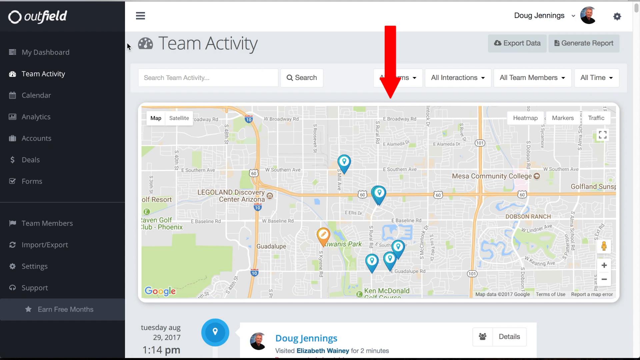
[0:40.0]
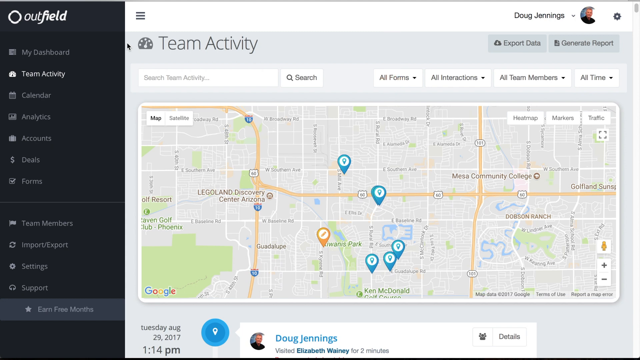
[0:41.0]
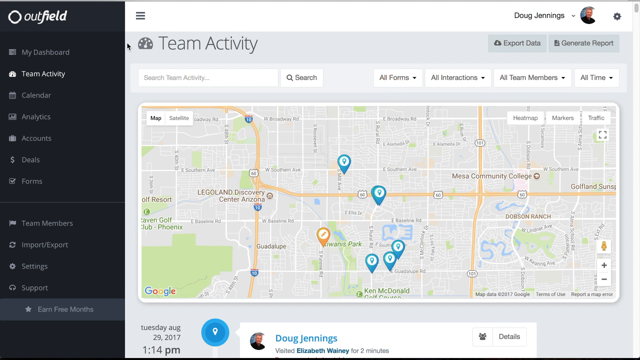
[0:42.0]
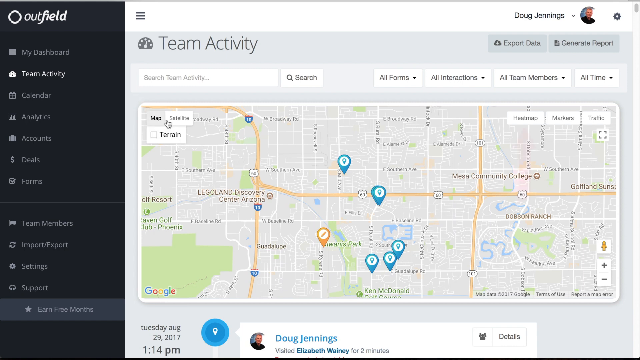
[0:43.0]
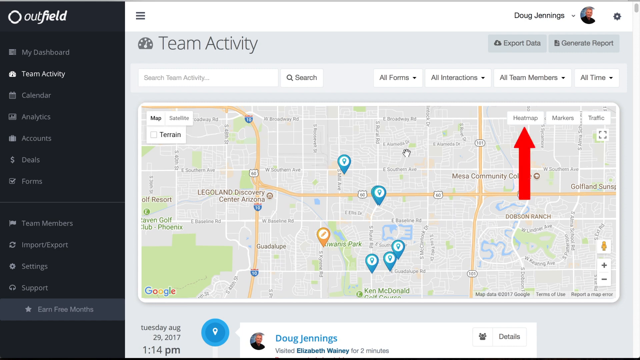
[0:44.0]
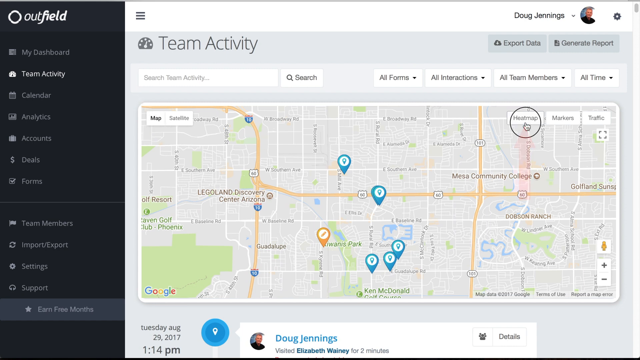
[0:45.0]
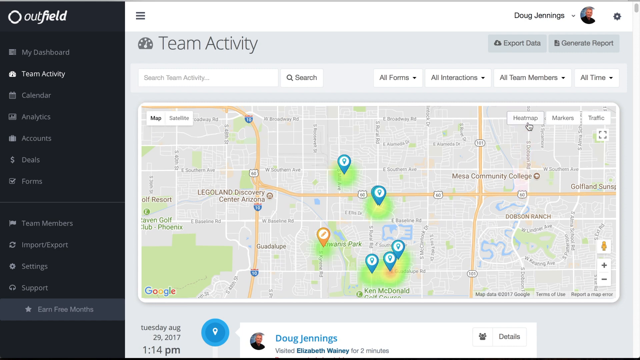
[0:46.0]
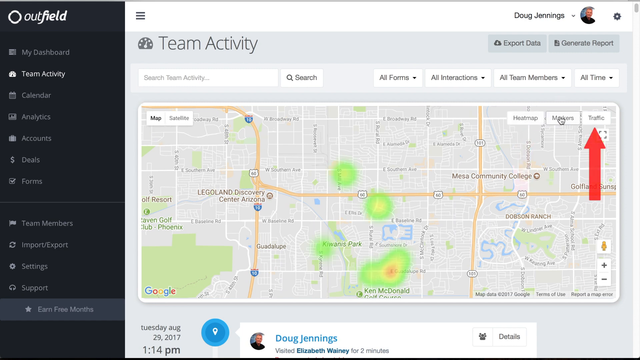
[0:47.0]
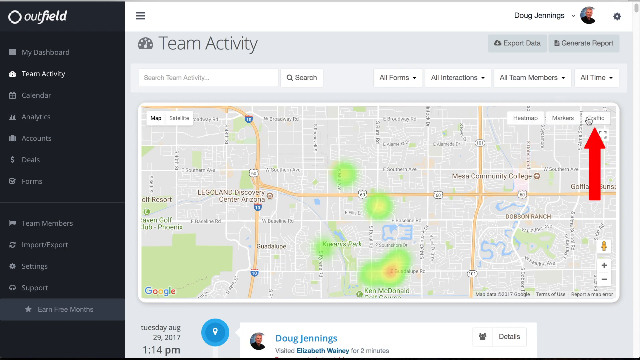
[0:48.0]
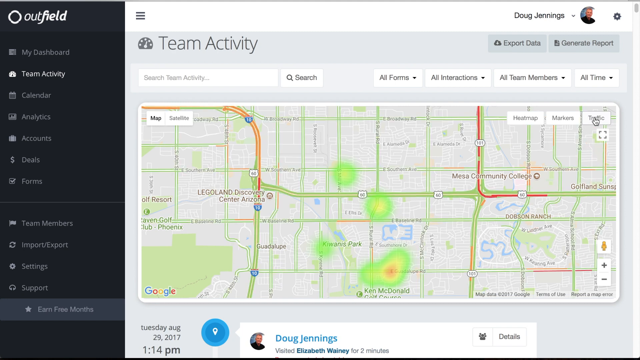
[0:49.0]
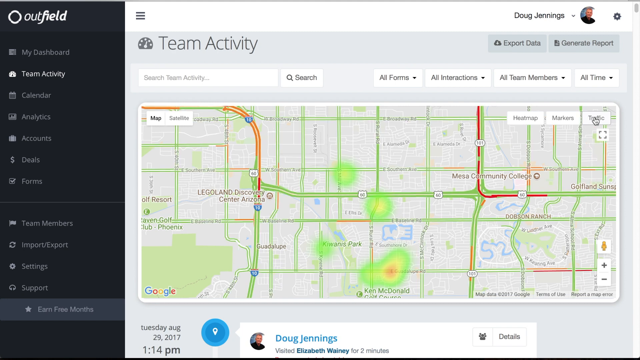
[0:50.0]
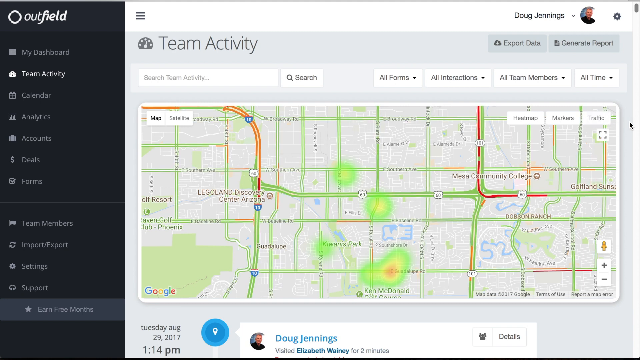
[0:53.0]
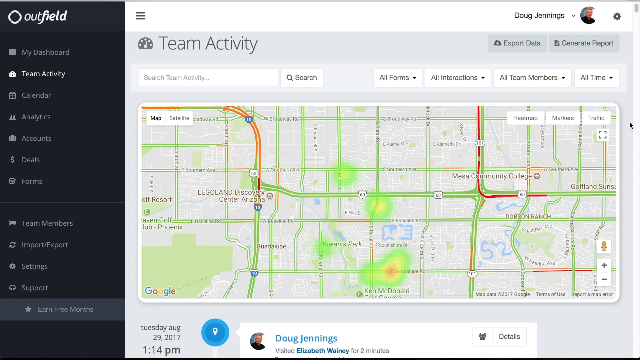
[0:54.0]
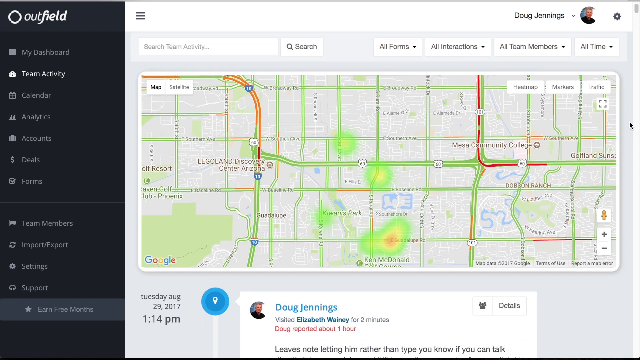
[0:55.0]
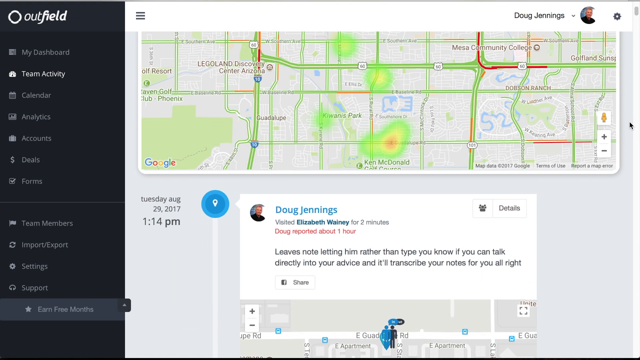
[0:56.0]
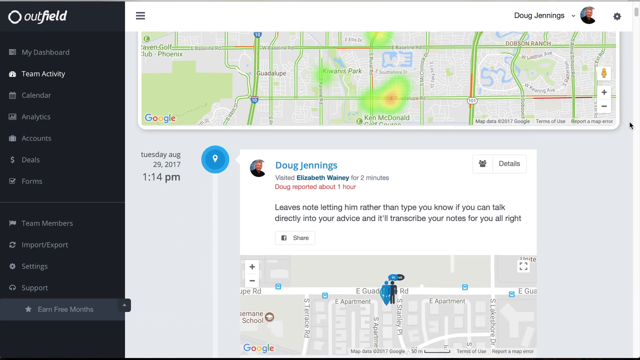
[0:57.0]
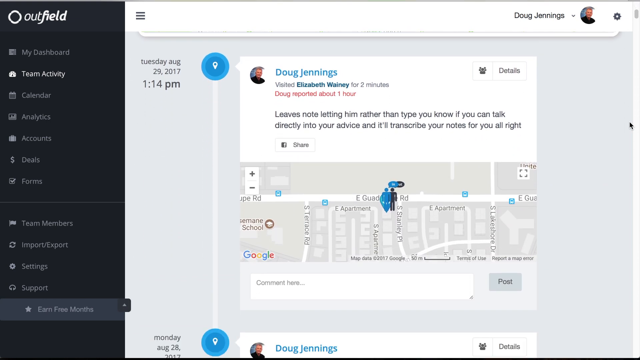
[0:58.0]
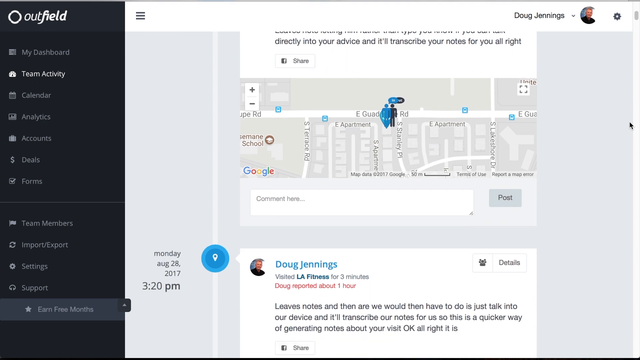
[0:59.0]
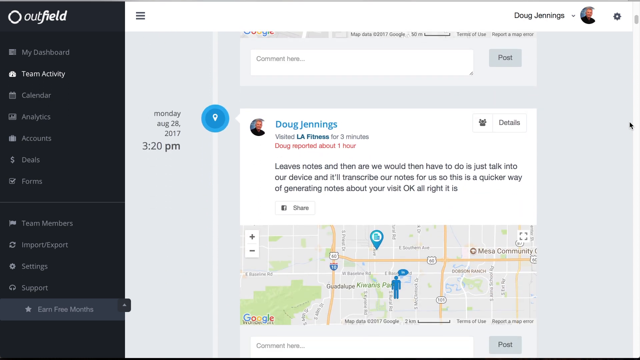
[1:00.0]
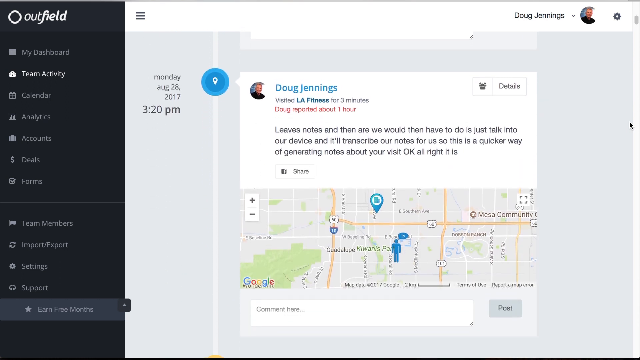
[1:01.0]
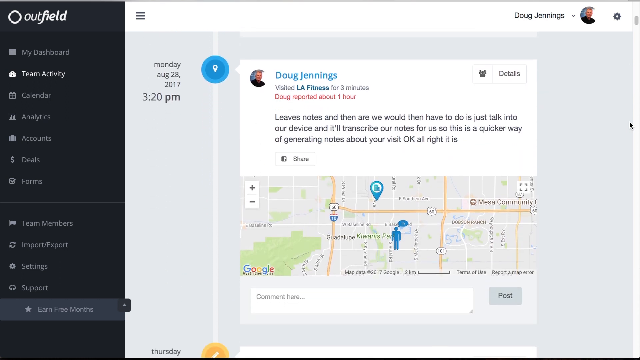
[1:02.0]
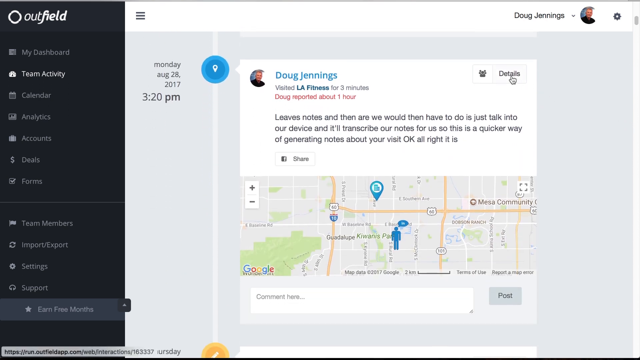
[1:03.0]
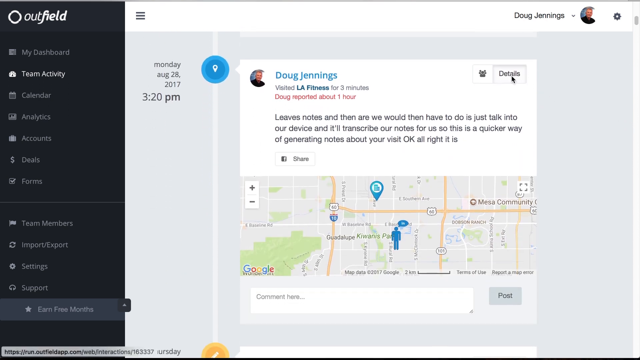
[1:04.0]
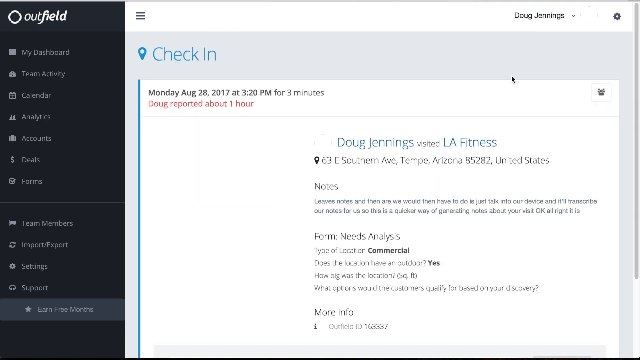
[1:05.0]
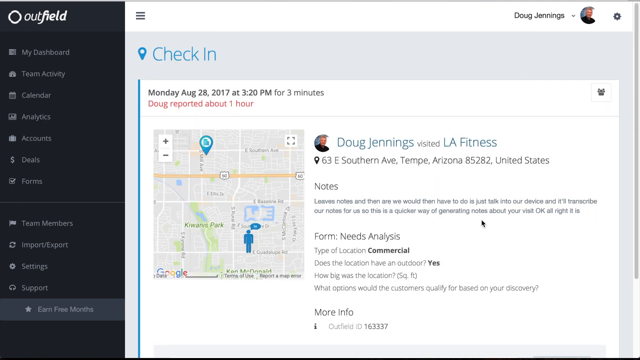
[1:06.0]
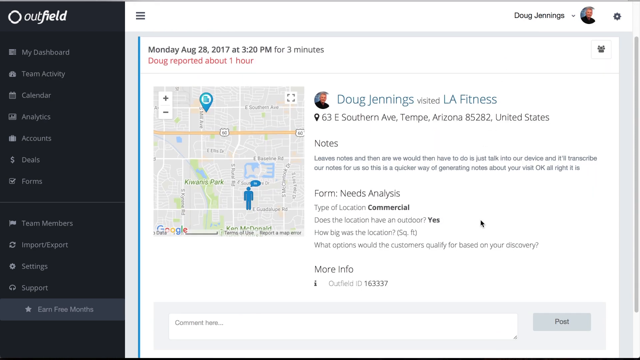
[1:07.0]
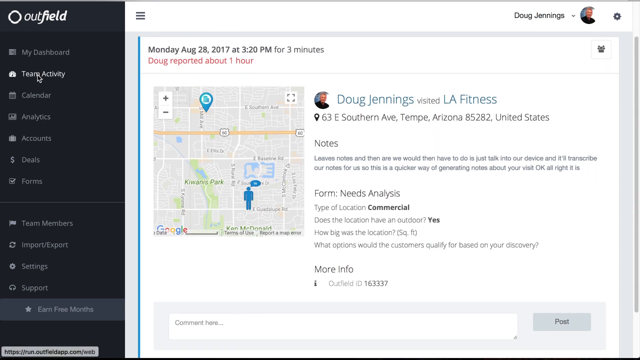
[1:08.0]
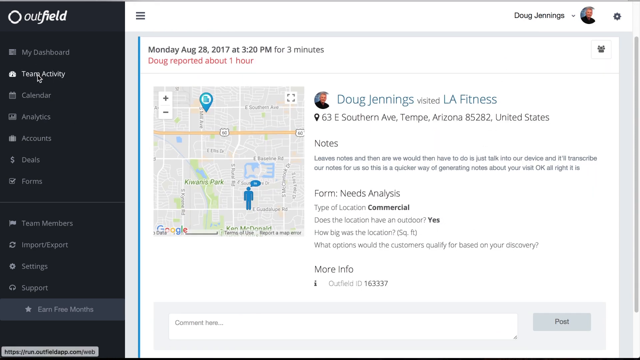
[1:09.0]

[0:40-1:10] Inside Outfield, the profile name "Doug Jennings" appears in the upper right-hand corner, with what looks like a blurry picture of a guy in a black shirt. Settings are on the right side, and underneath them it says "export data" and "generate report". A red arrow points down to the middle of the map, where the street names are too blurry to read. A search box is right under "team activity". Then the map disappears, and the arrow points to different options such as street map and traffic. The map turns green with green and red lines. The person scrolls down, showing previous activity and an option to check in. Then the person appears to click on team activity.